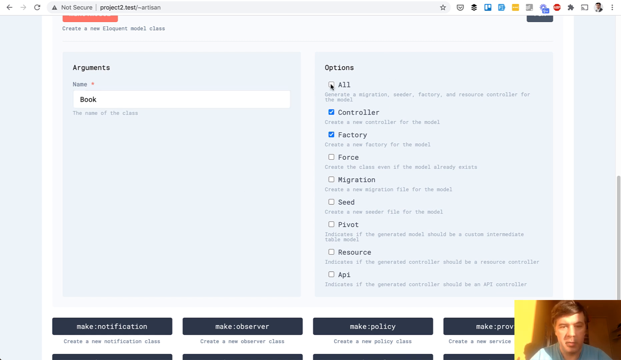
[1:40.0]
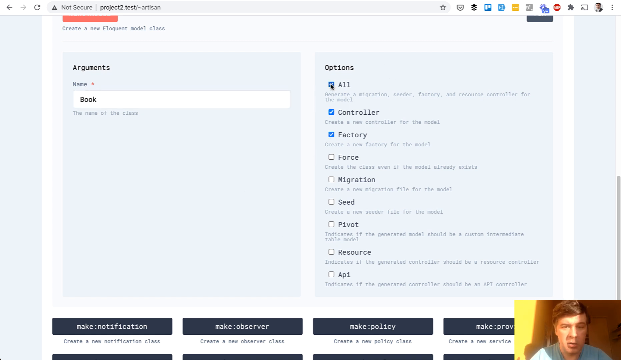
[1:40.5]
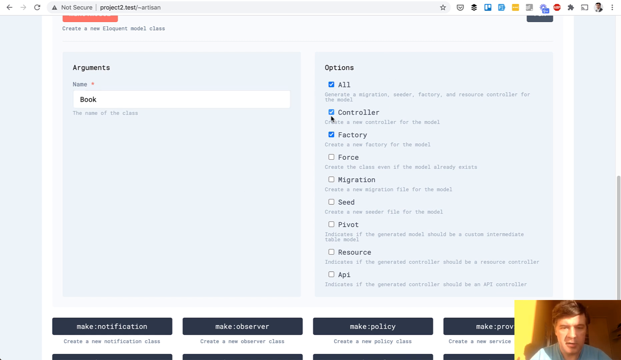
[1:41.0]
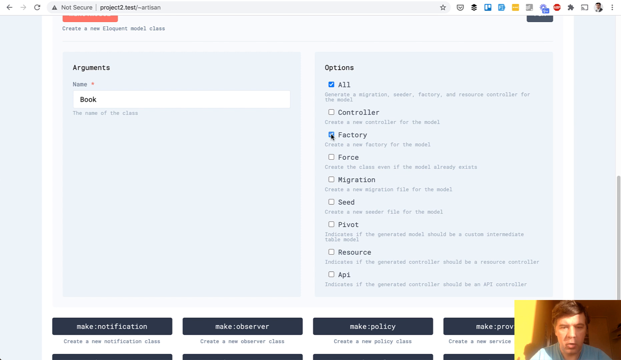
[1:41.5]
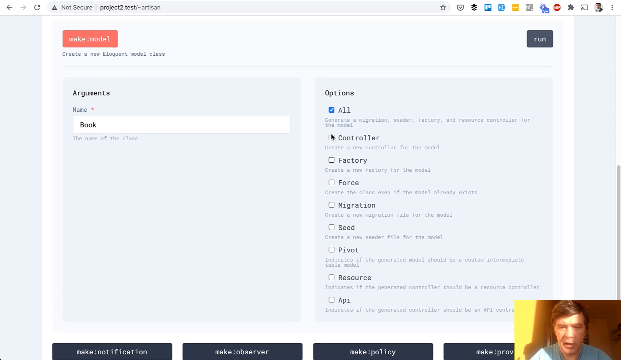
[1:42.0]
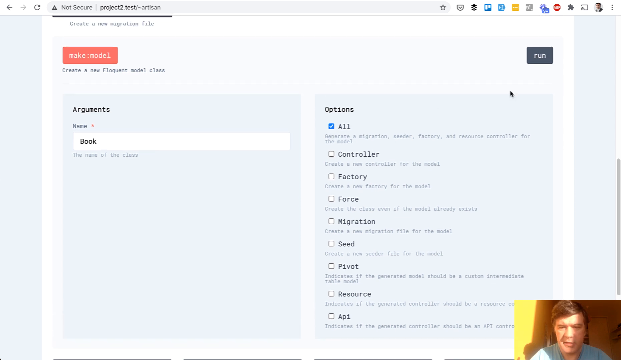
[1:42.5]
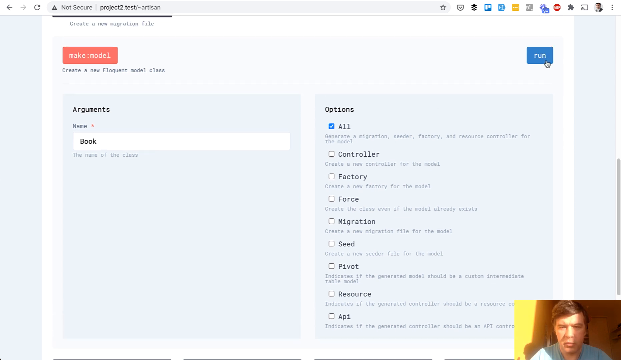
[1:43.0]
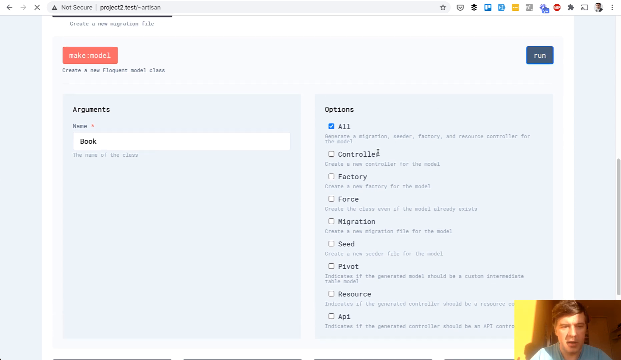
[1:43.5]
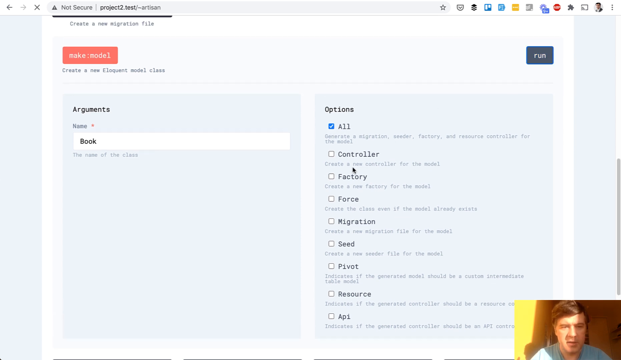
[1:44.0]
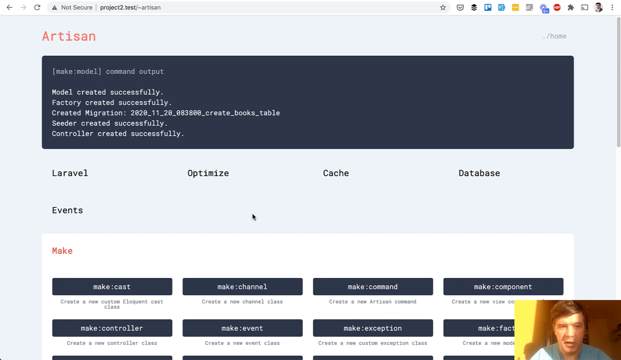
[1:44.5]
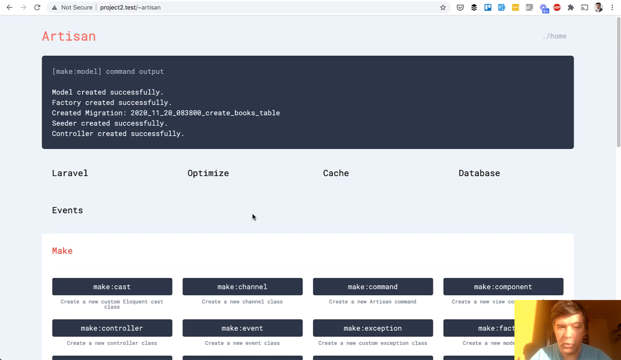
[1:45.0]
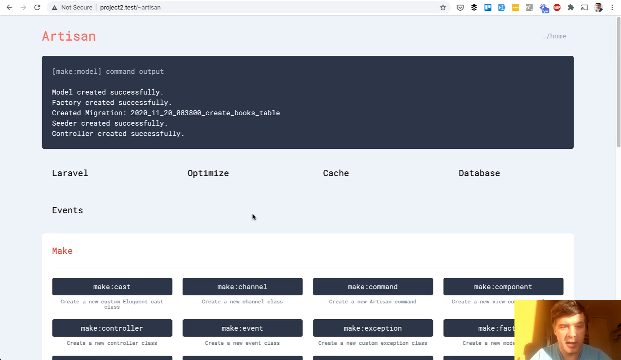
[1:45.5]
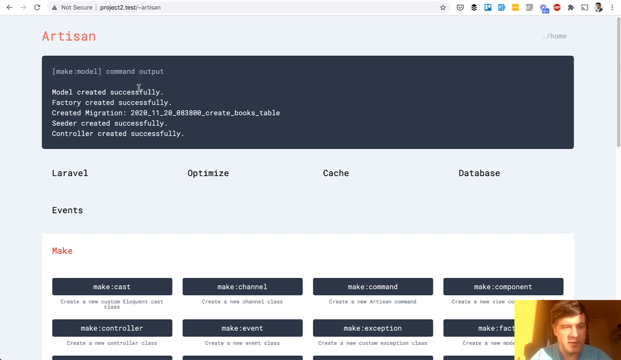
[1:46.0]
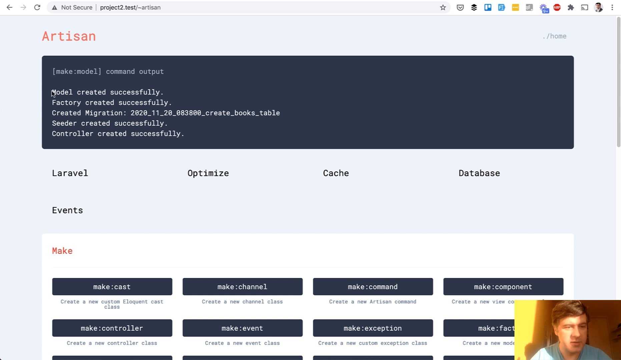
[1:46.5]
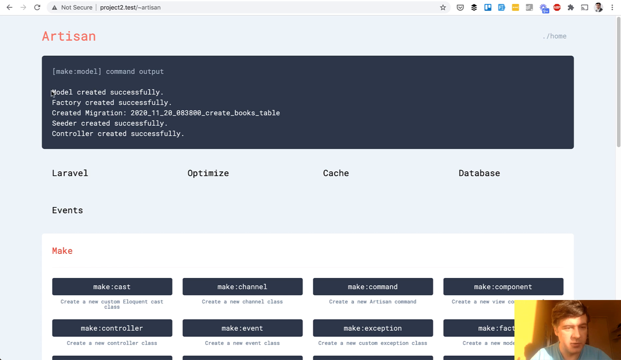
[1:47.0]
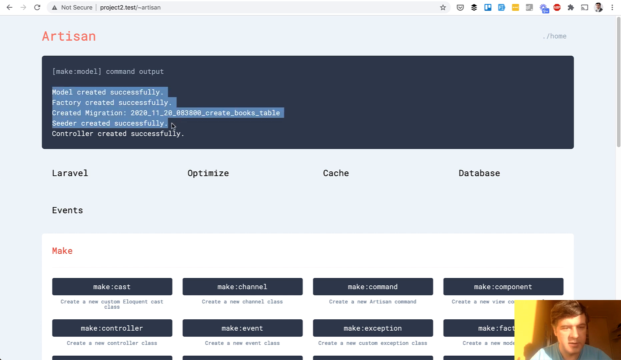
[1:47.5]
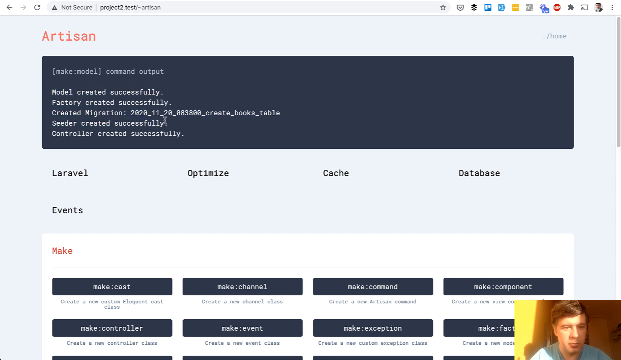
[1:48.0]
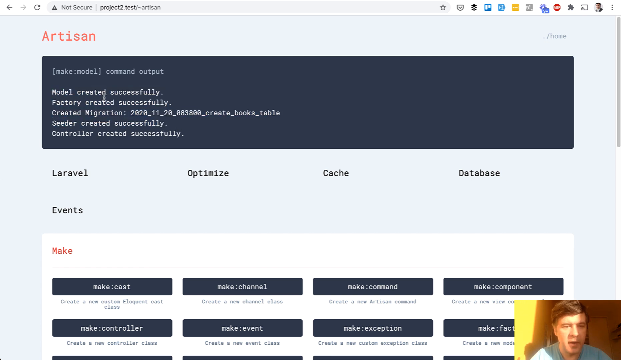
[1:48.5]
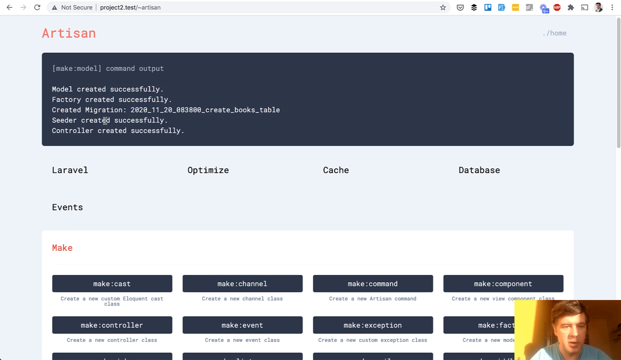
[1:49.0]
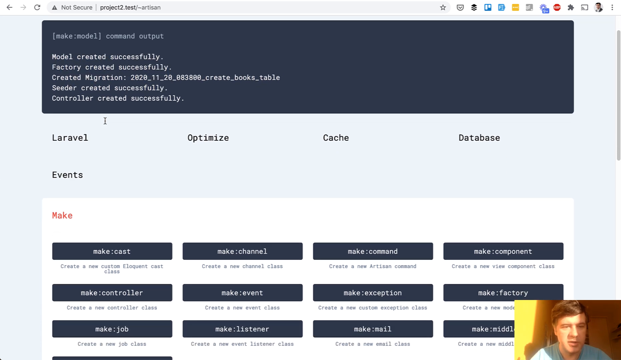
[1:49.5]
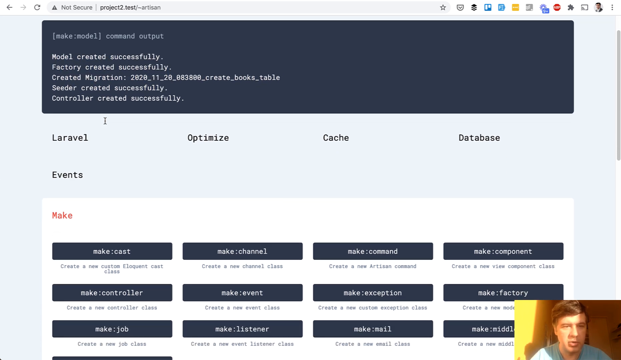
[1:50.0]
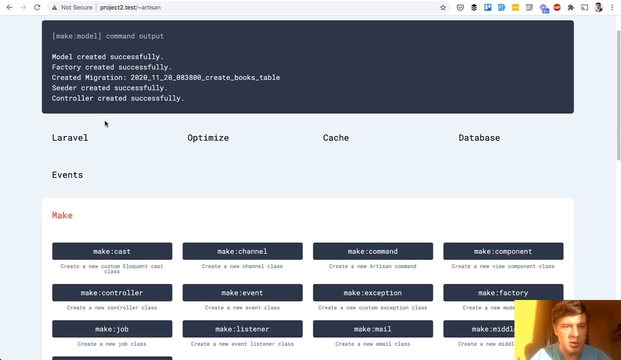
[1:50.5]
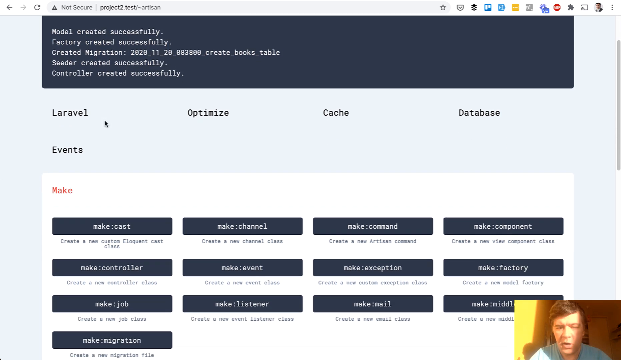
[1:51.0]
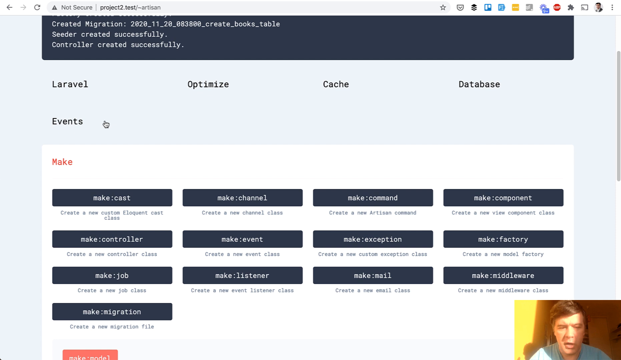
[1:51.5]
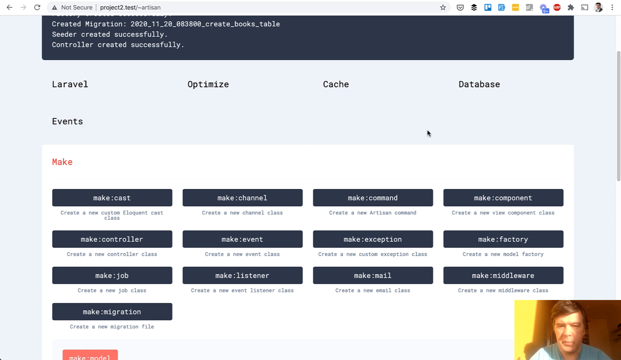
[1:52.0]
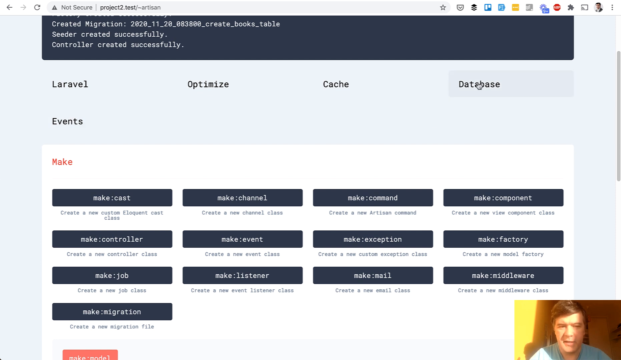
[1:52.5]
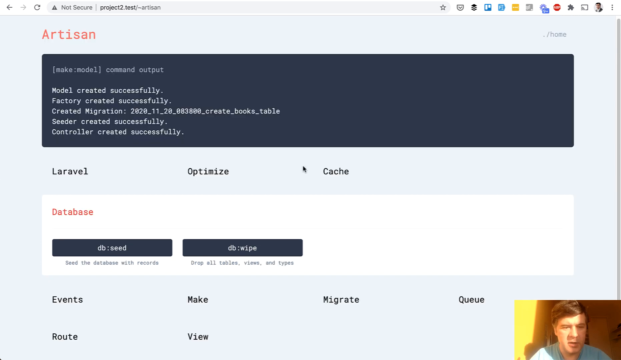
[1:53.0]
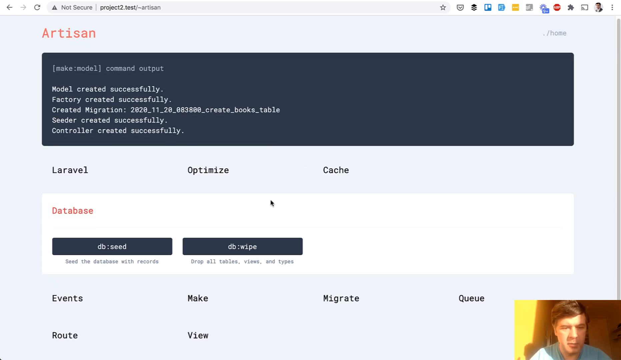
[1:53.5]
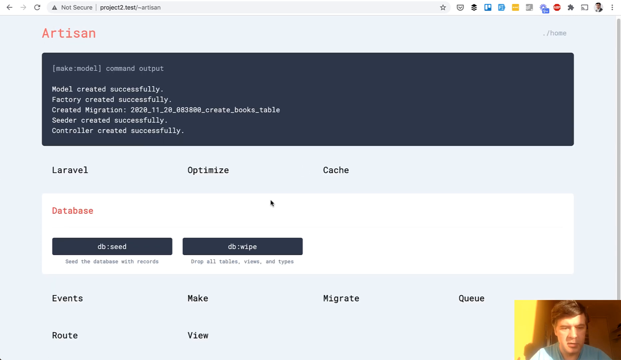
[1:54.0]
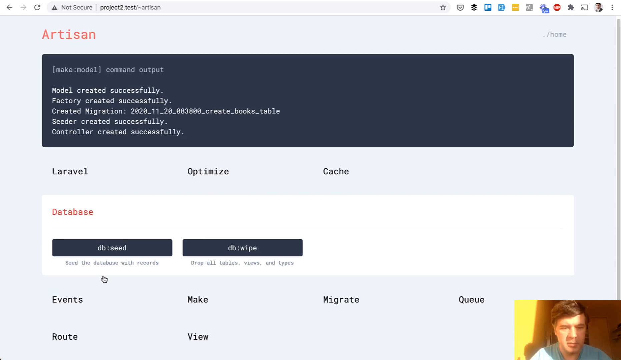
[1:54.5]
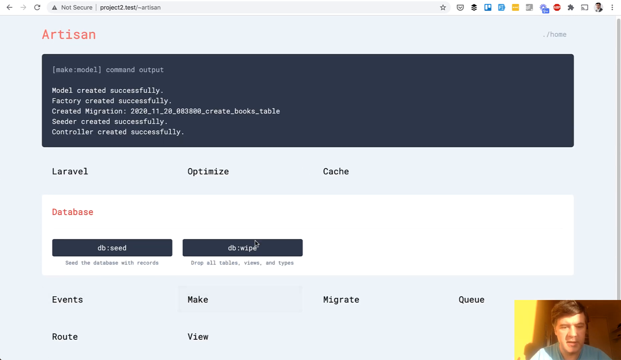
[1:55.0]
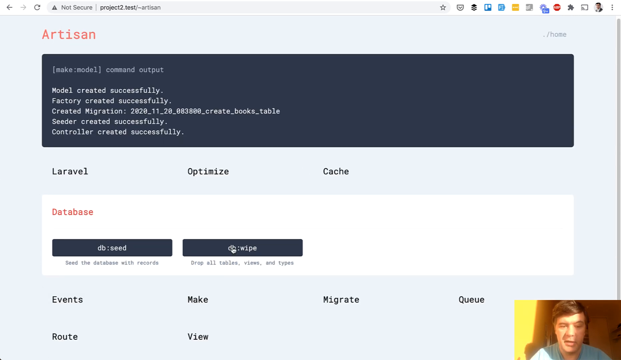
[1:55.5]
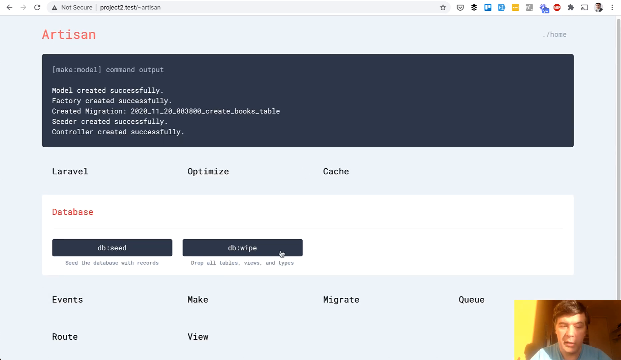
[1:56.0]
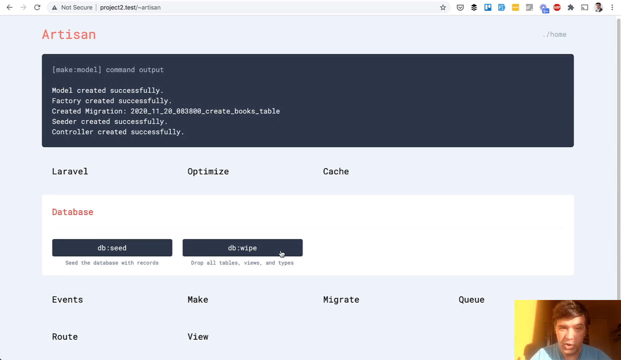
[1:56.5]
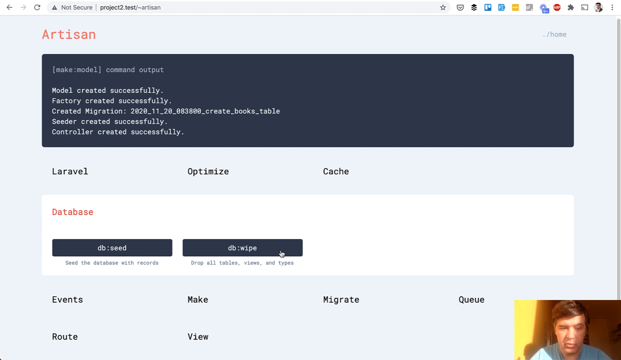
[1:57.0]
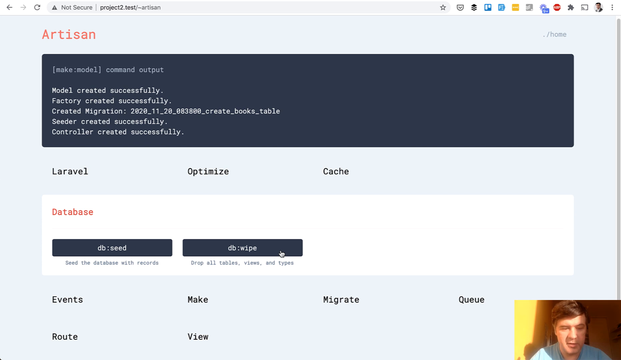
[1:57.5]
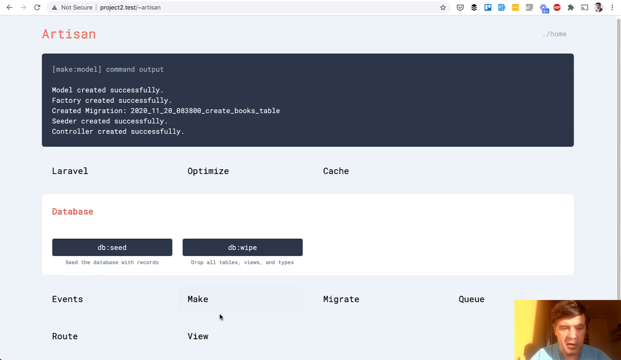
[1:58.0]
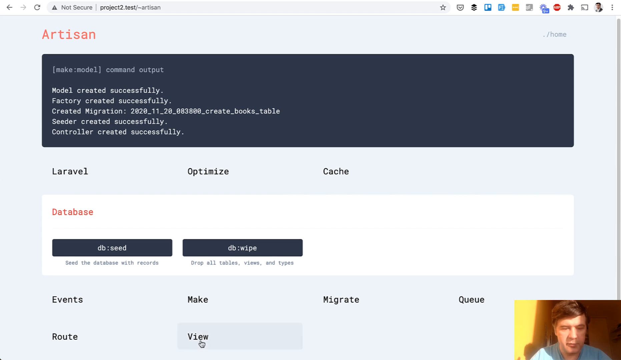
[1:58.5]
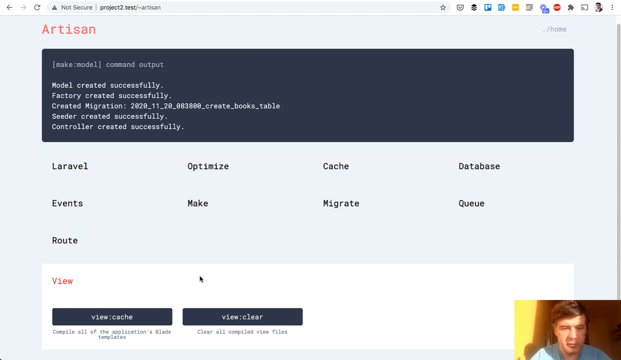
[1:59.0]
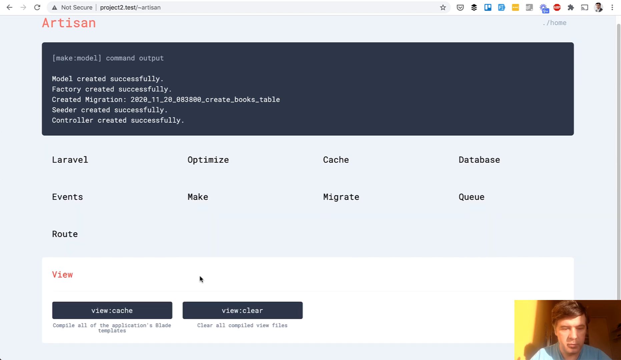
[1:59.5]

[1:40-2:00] On the site project2.test, a field for an argument shows the word "book" typed in, and under the options he clicks the boxes for controller and factory. The Caucasian man with brunette hair and a light blue shirt is at the bottom of the screen. The top of the page says "artisan" and has a "make" section listing "make cast," "make channel," "make command," "make controller" and "make event," along with database items such as "database" and "database wipe."